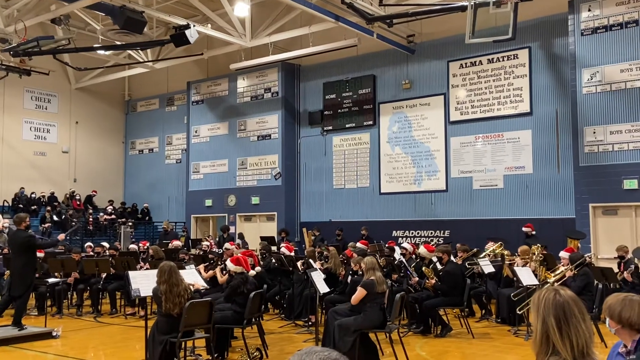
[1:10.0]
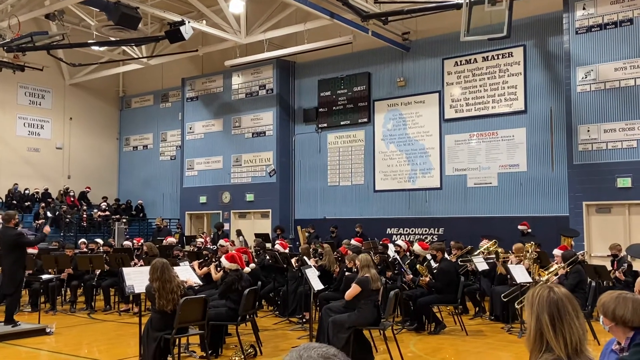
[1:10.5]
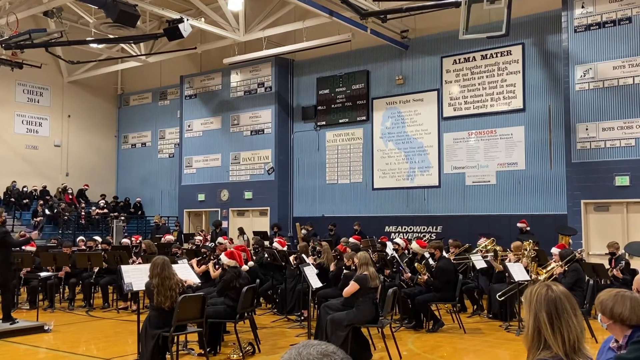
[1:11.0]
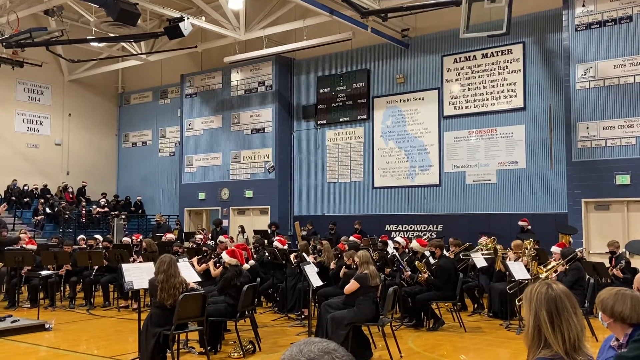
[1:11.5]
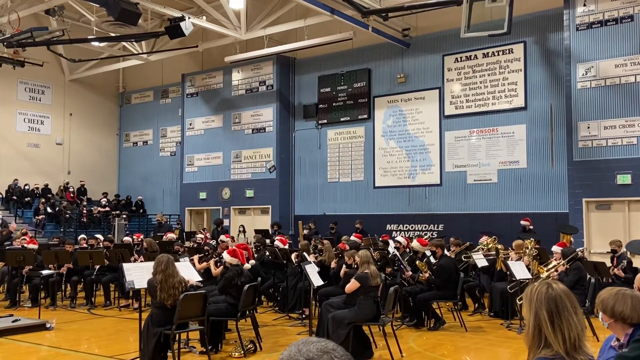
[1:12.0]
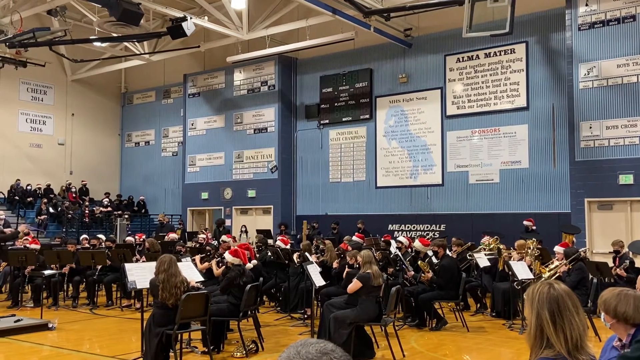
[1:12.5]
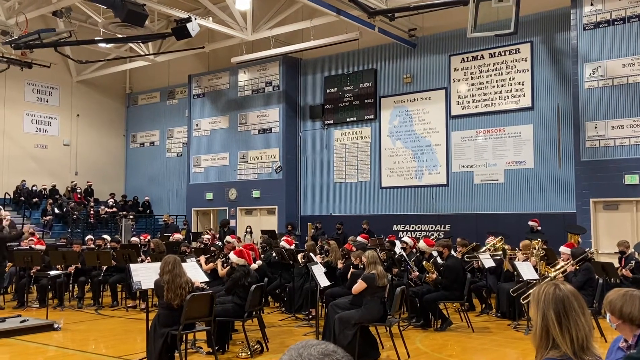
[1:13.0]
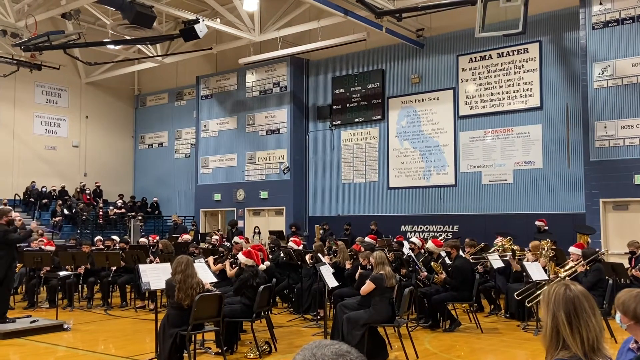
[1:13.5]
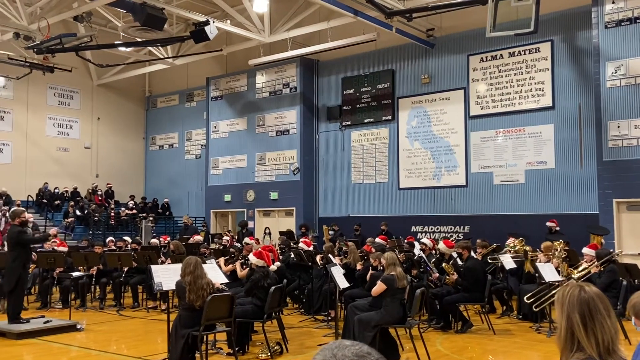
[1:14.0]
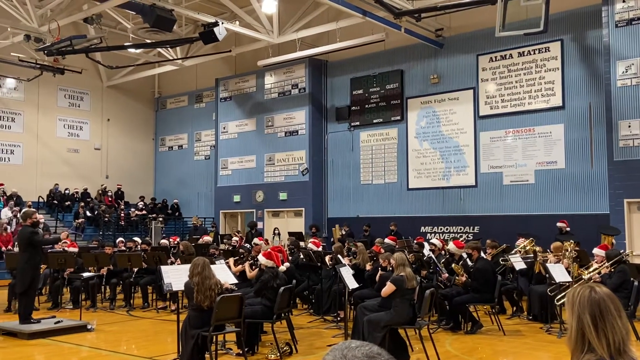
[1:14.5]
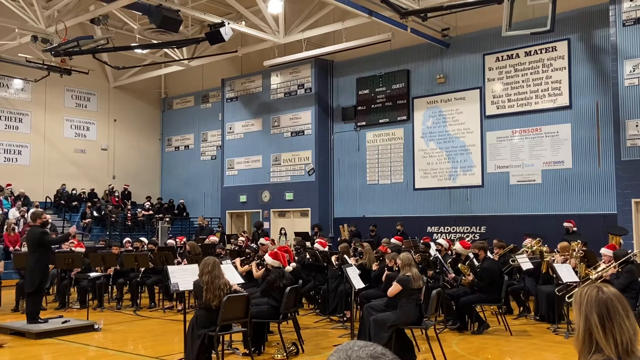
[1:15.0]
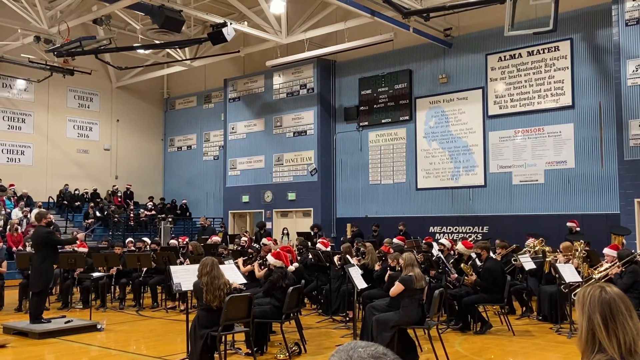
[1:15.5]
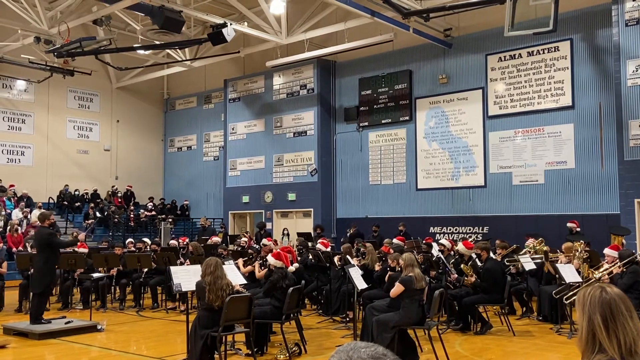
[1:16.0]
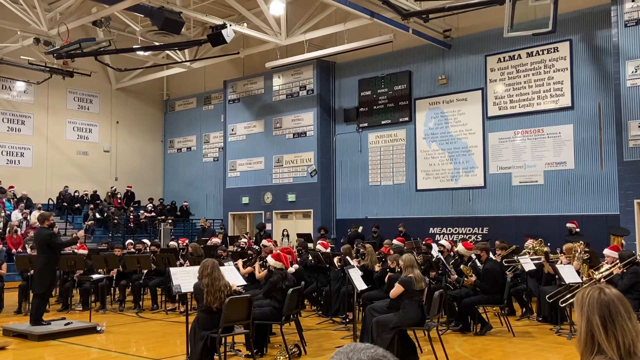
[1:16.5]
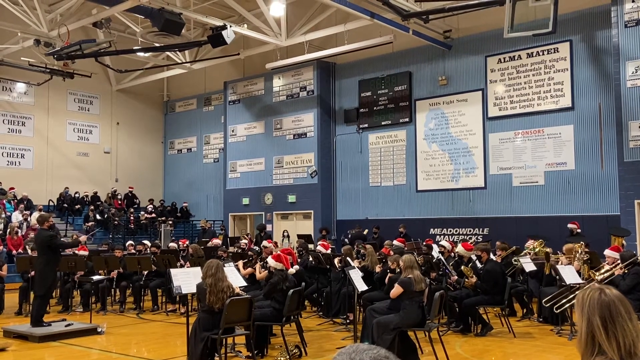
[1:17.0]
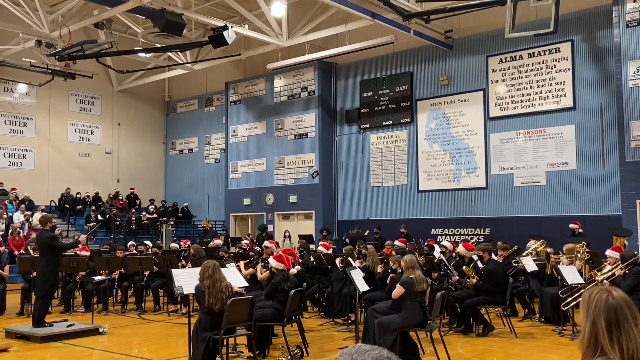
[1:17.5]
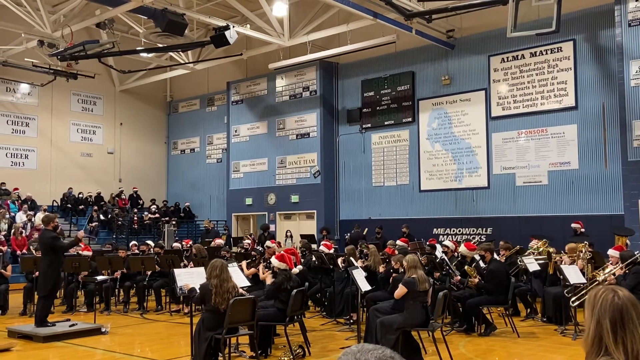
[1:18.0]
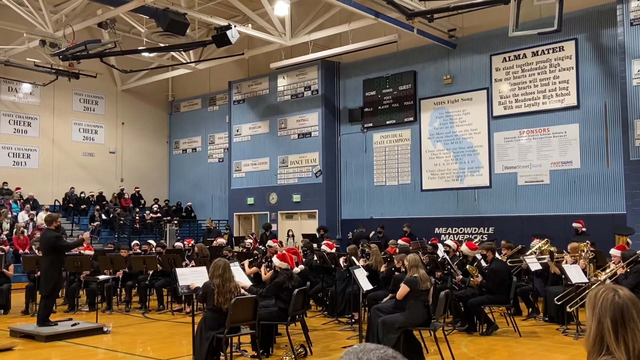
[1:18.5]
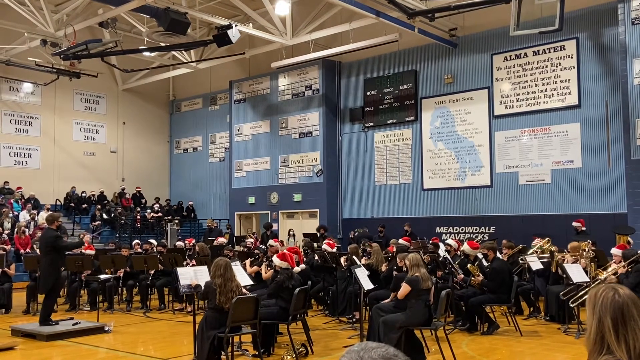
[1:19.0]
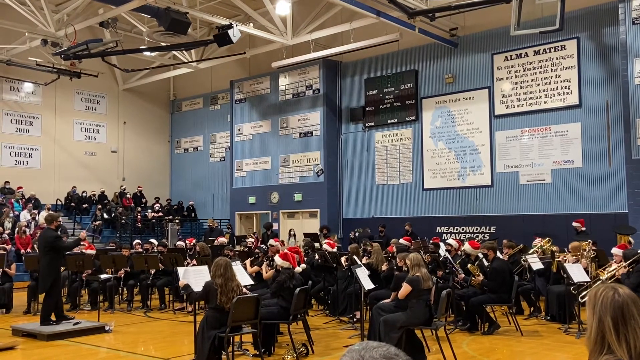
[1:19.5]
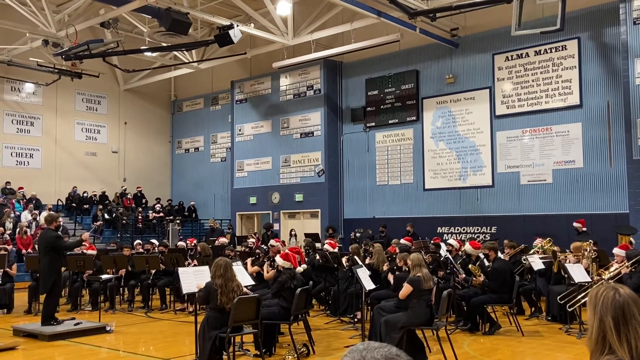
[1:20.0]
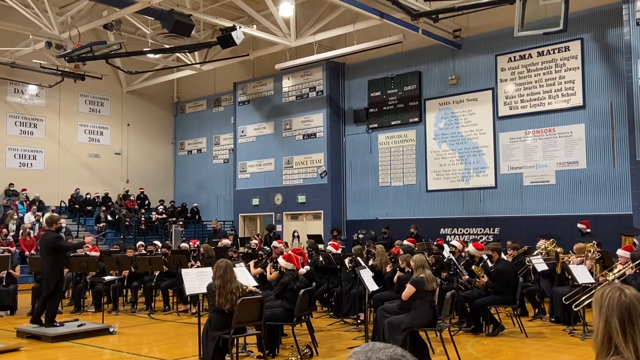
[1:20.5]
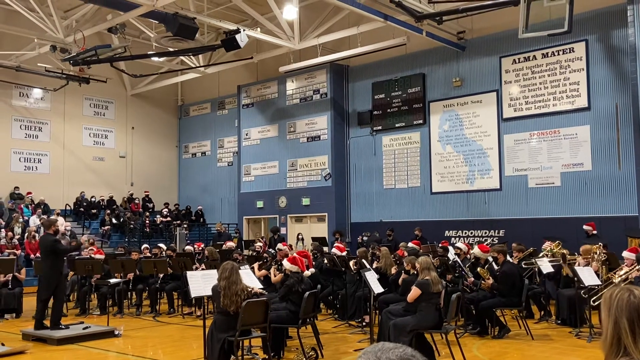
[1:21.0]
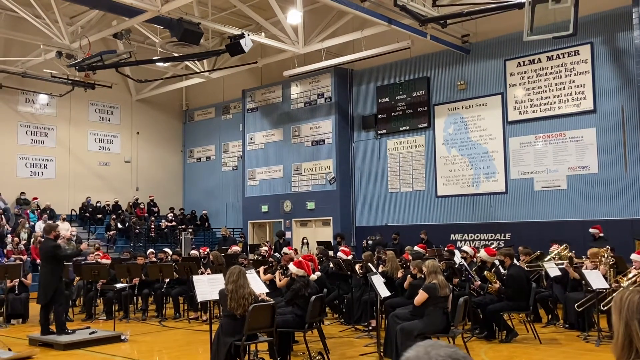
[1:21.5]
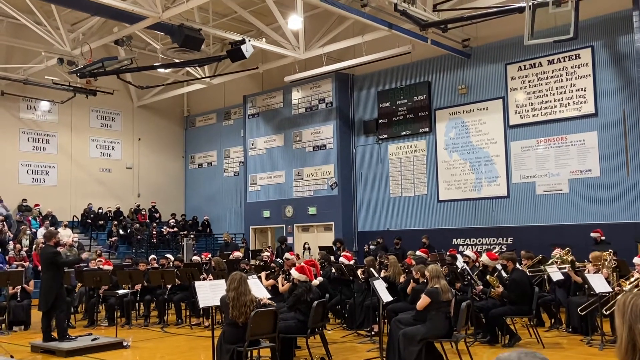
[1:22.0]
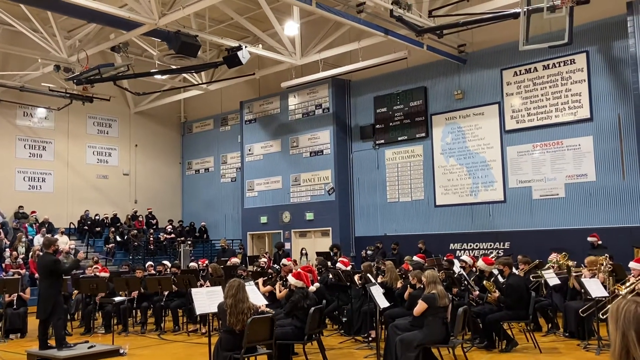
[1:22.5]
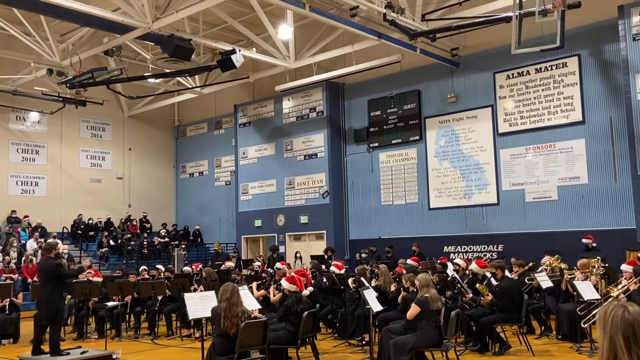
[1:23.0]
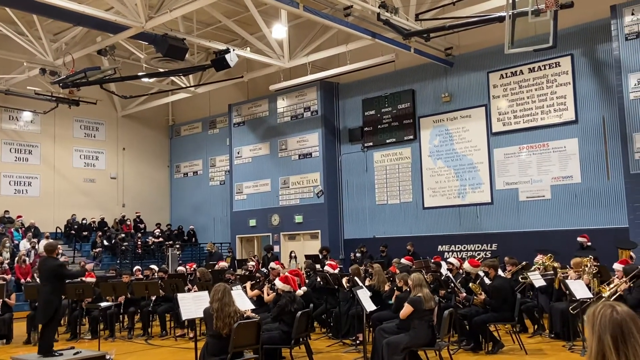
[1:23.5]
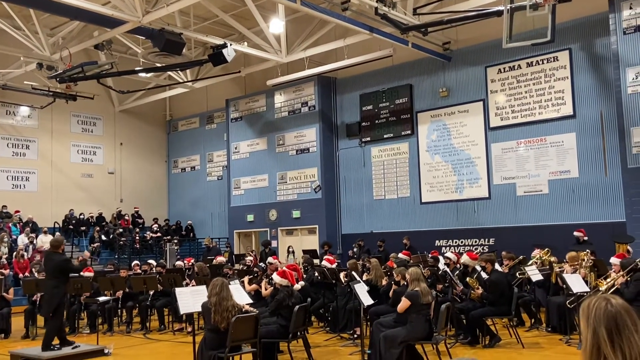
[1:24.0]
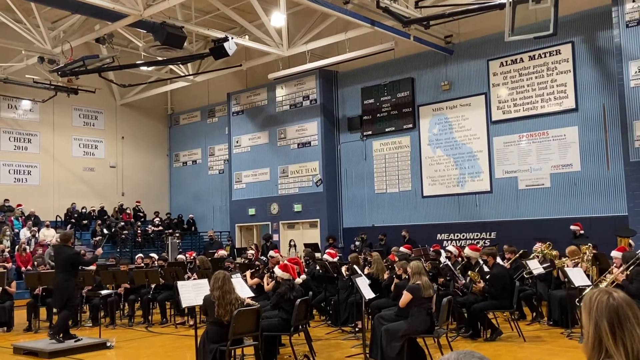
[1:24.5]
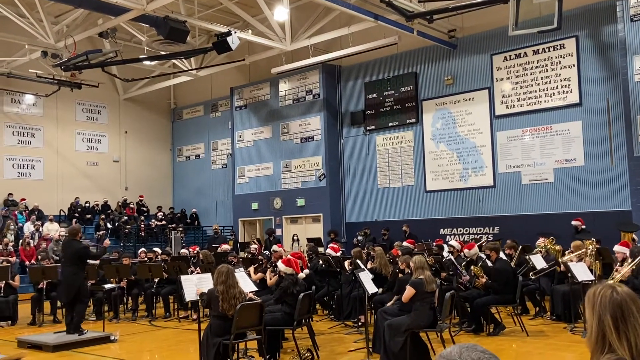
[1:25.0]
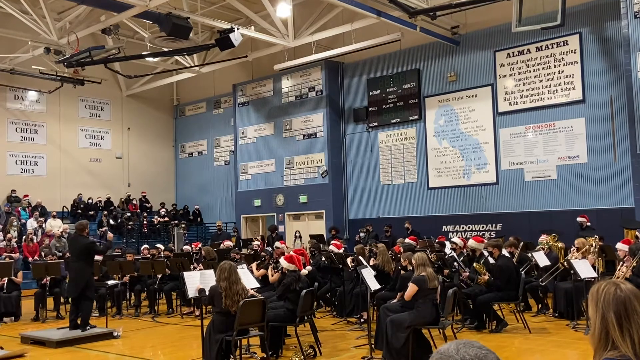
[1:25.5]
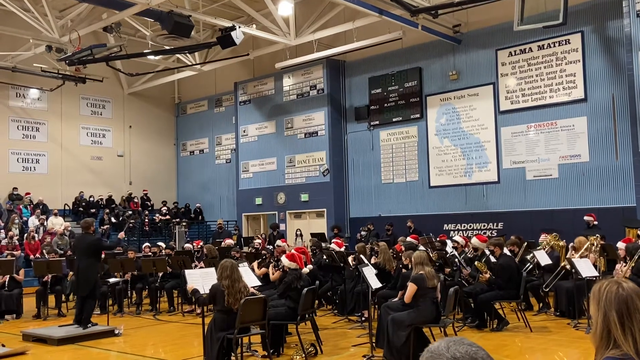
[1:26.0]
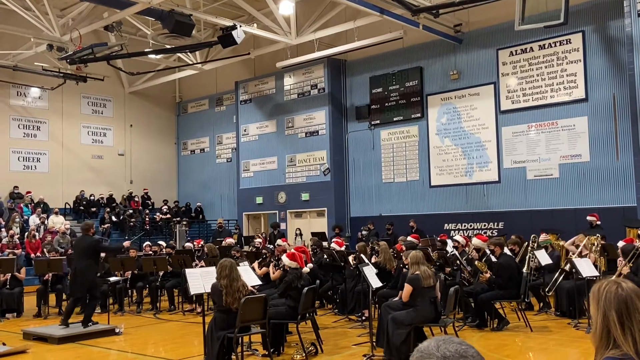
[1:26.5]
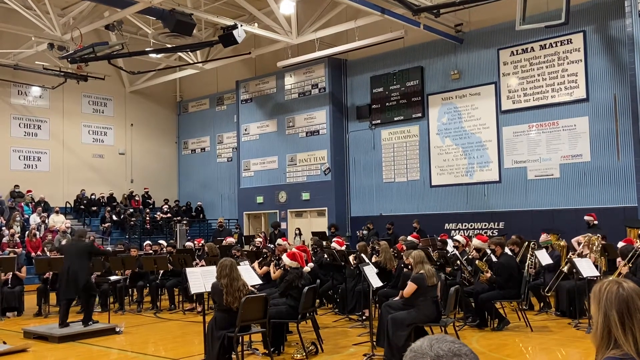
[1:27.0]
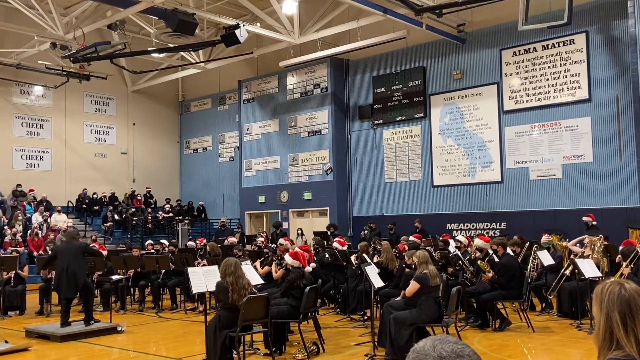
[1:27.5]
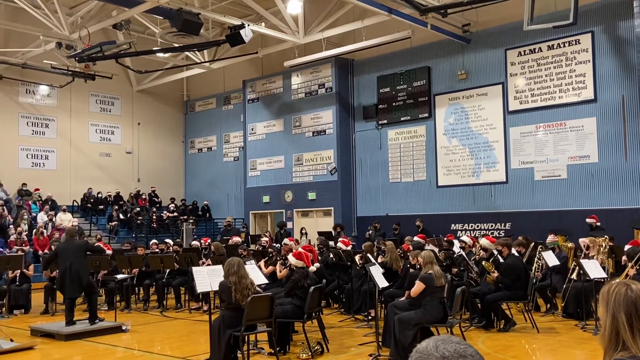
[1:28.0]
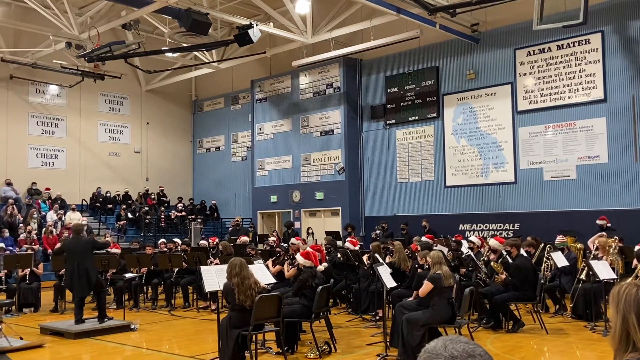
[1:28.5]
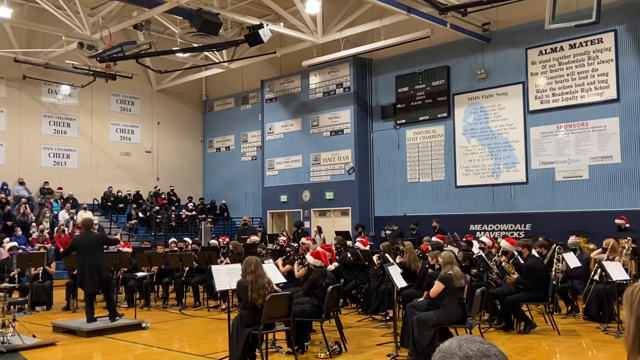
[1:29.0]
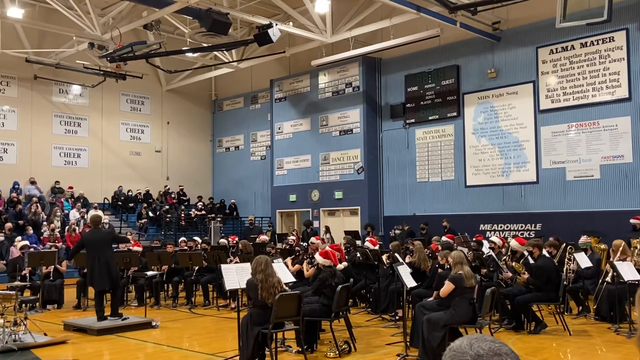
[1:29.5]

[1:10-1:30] In the gymnasium, what is possibly a high school band is playing. They sit in black chairs on the shiny gym floor, everyone in black clothes, and some of the students wear red and white Santa hats. At the top of the frame, the basketball nets are brought up. The camera moves over a little, showing some of the students playing their musical instruments. Everyone playing an instrument wears black, and the conductor wears a black suit and holds a black stick in his hand. Each player has a little stand in front of them holding white pieces of paper with their music on it. To the left is a white wall with white signs bearing black writing, and beside it is the blue wall.